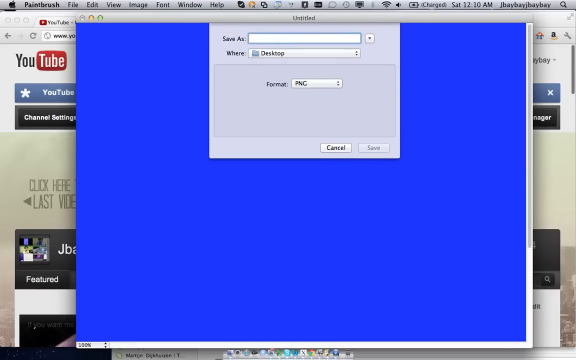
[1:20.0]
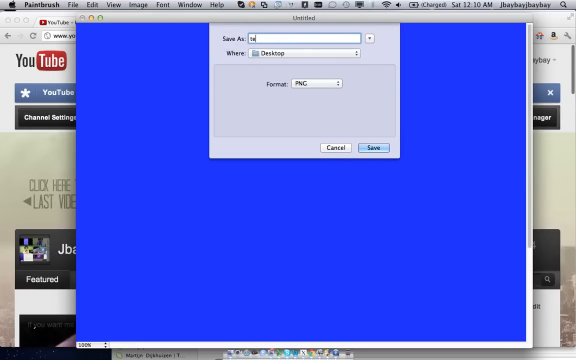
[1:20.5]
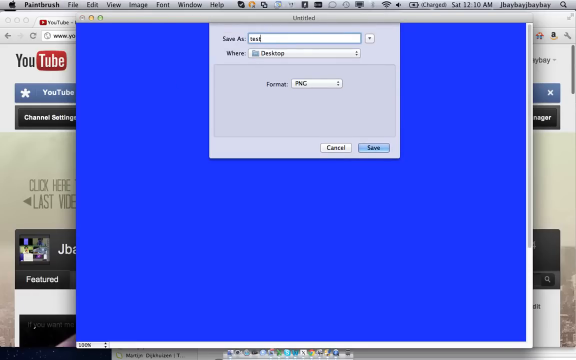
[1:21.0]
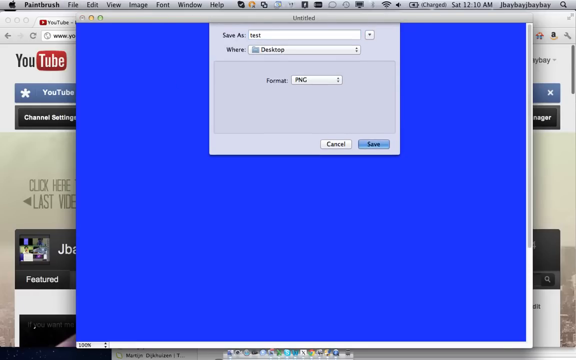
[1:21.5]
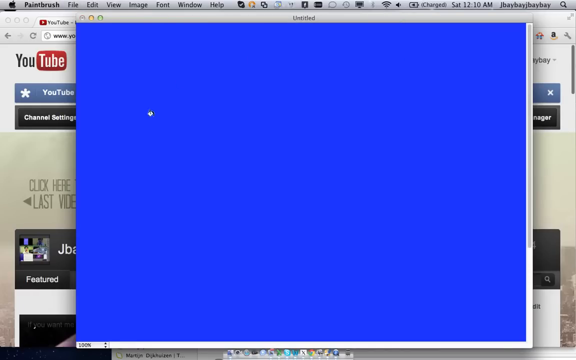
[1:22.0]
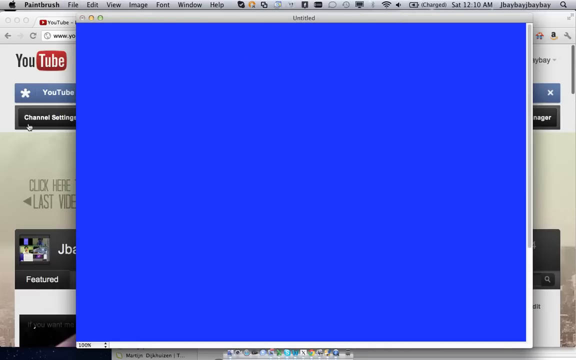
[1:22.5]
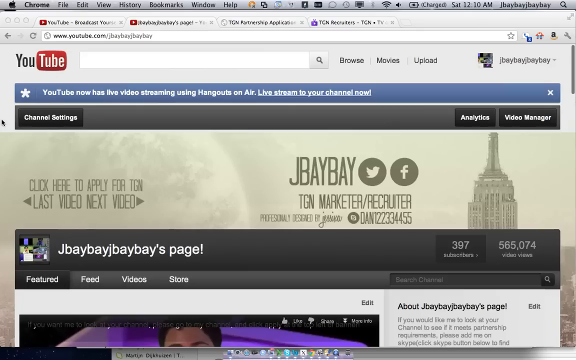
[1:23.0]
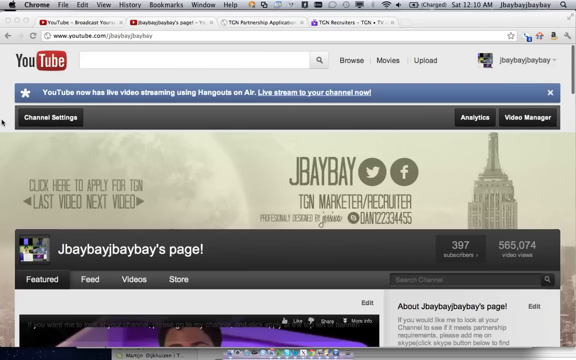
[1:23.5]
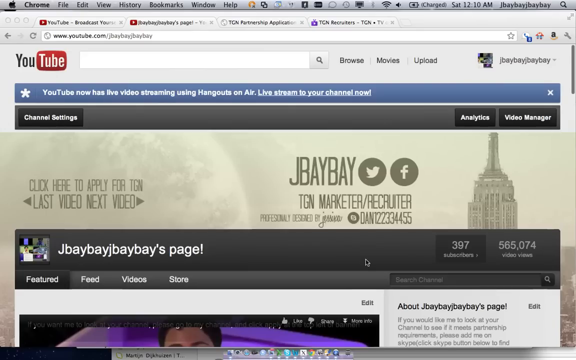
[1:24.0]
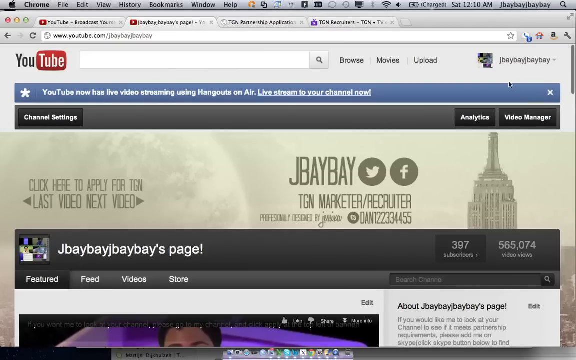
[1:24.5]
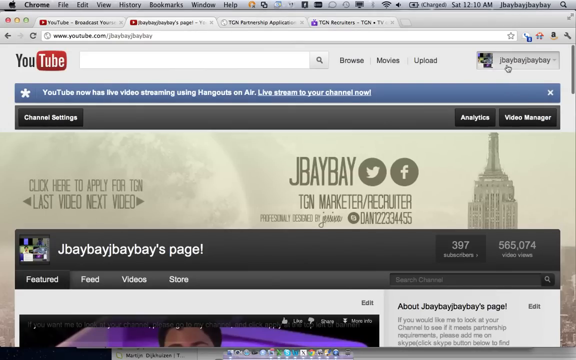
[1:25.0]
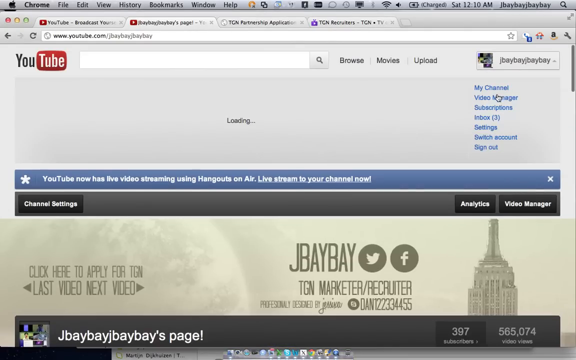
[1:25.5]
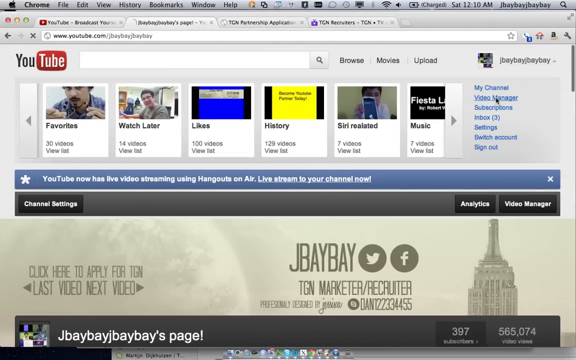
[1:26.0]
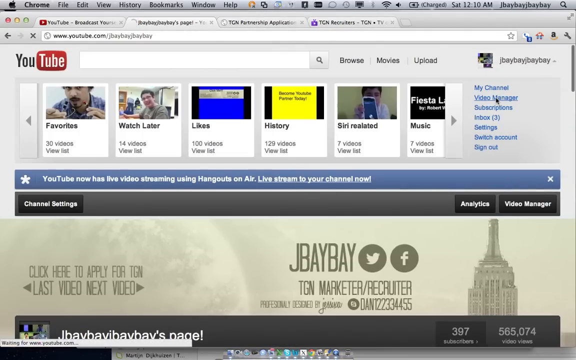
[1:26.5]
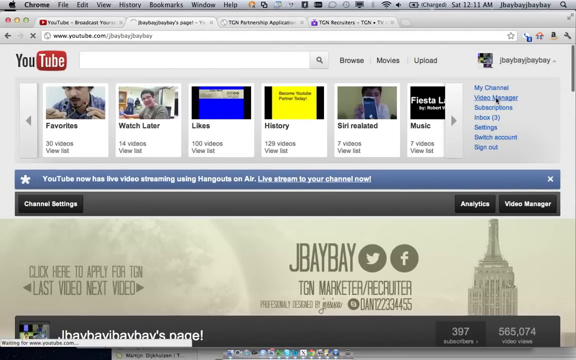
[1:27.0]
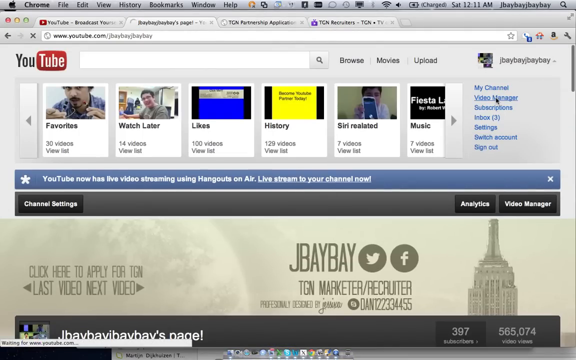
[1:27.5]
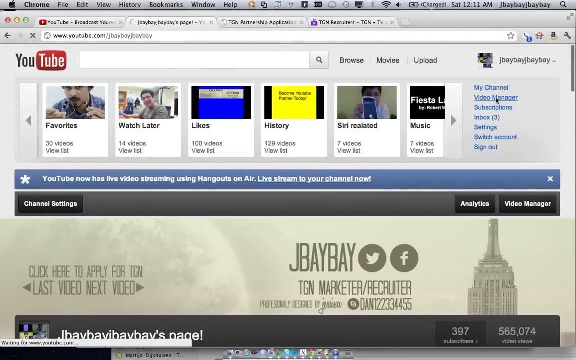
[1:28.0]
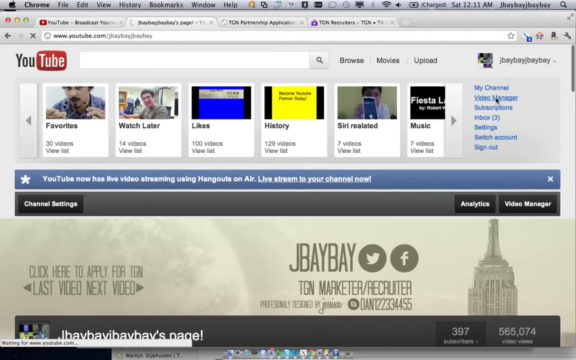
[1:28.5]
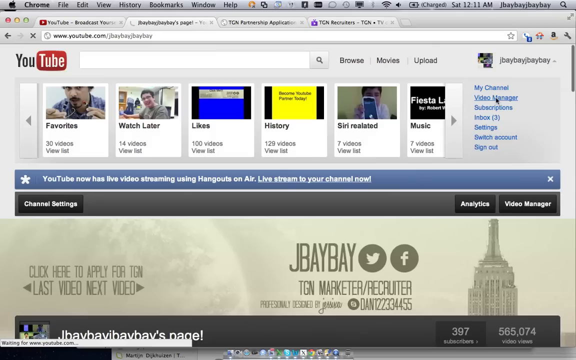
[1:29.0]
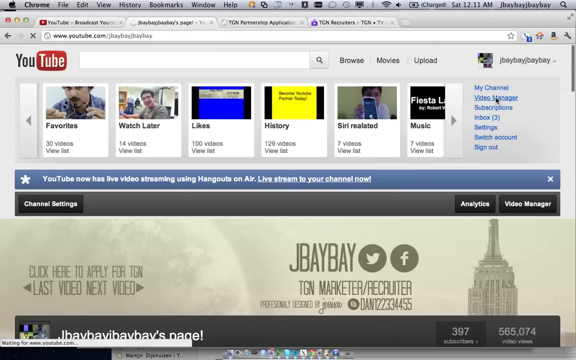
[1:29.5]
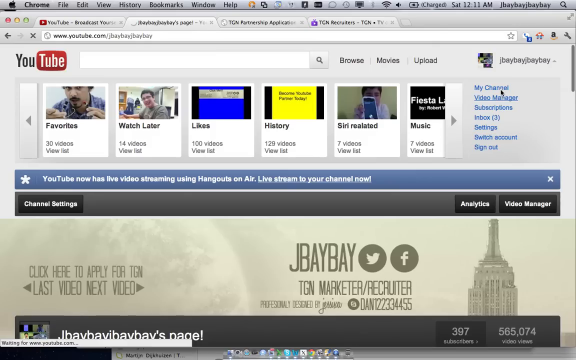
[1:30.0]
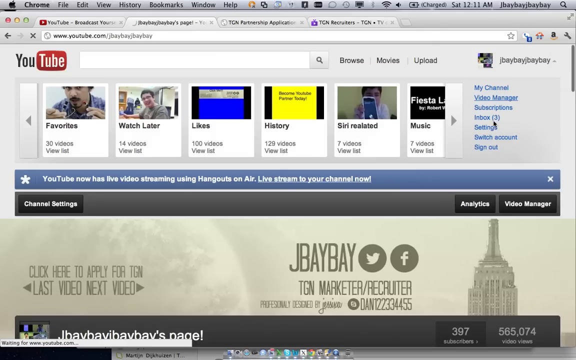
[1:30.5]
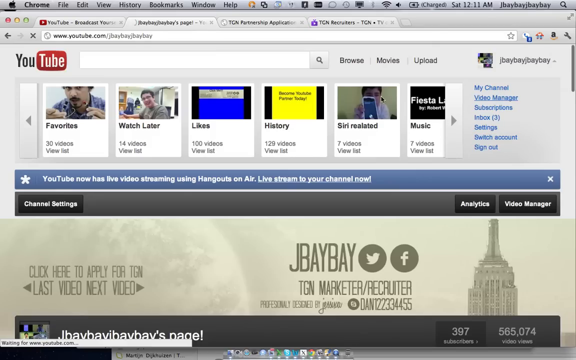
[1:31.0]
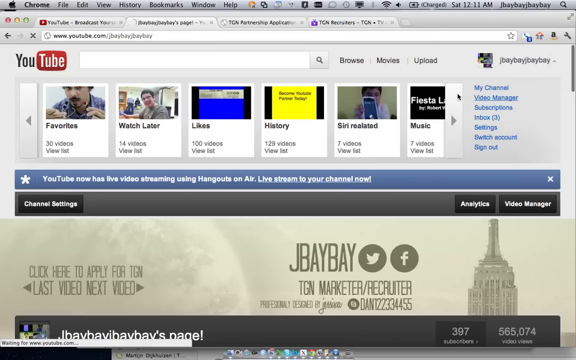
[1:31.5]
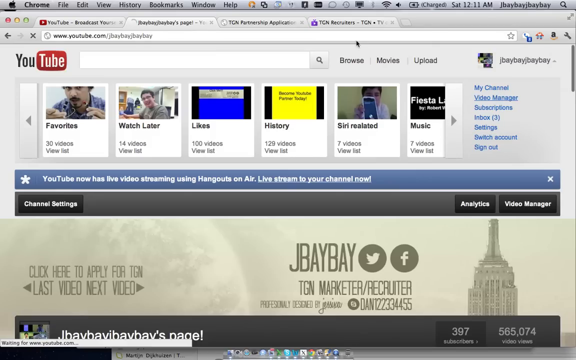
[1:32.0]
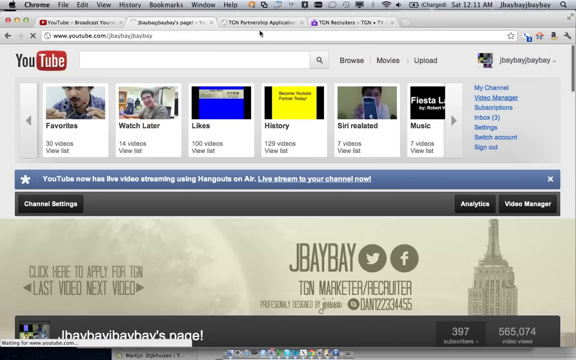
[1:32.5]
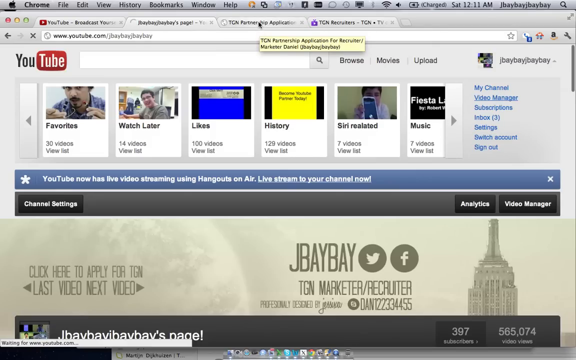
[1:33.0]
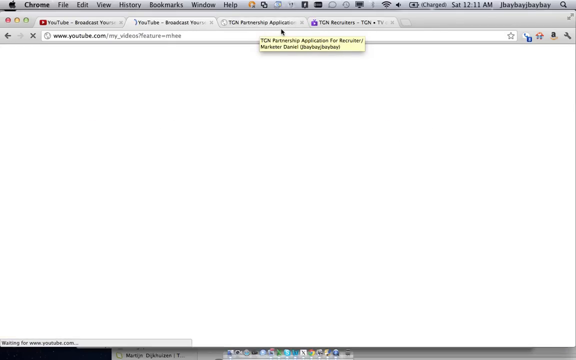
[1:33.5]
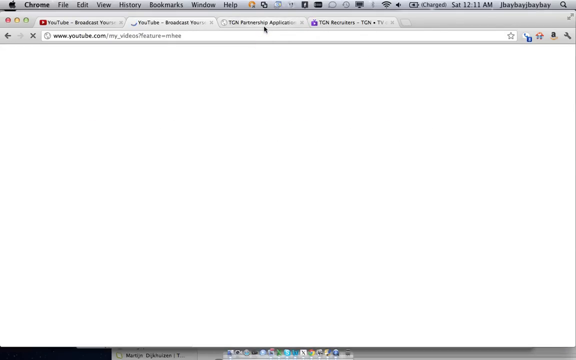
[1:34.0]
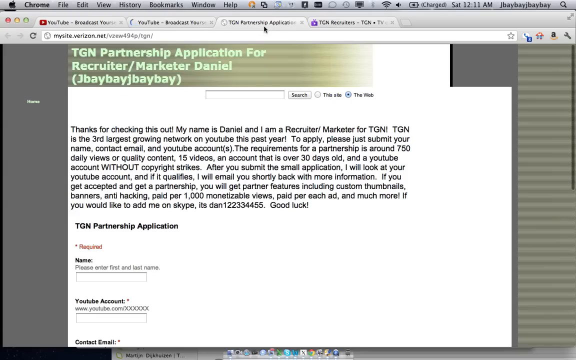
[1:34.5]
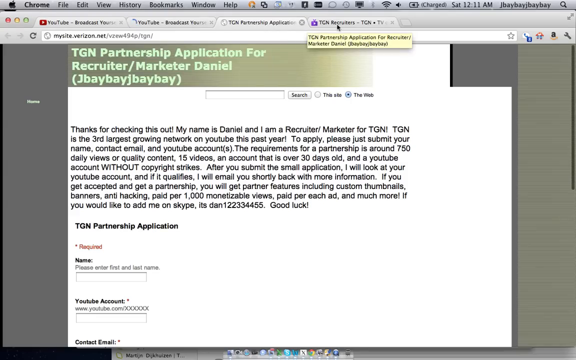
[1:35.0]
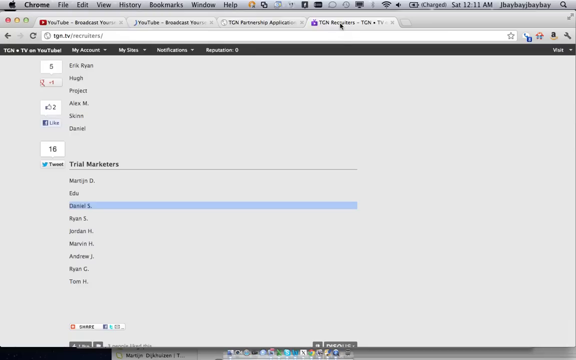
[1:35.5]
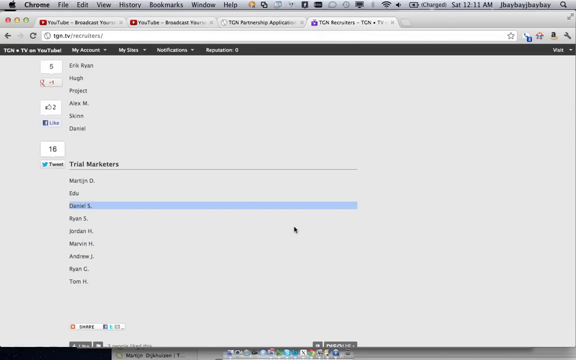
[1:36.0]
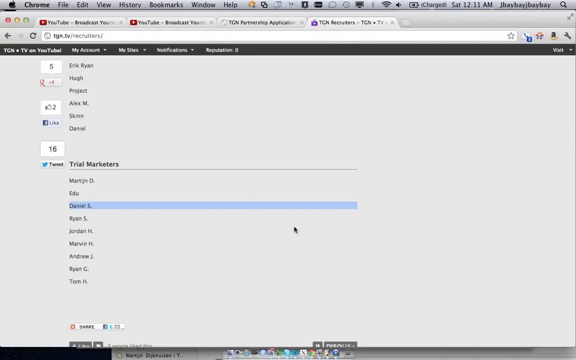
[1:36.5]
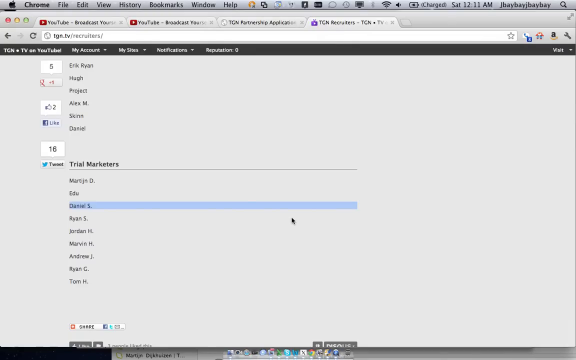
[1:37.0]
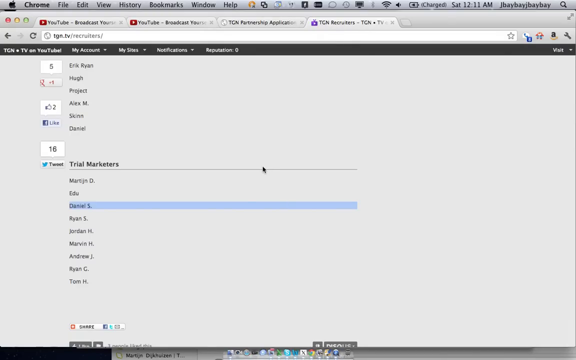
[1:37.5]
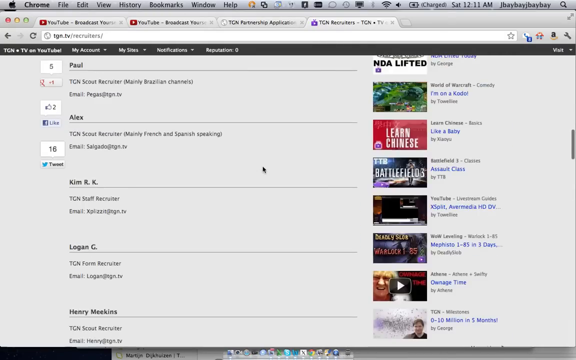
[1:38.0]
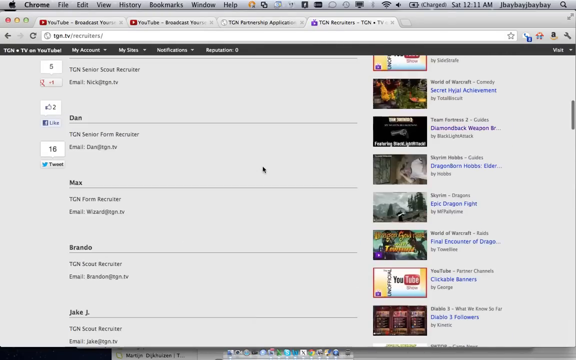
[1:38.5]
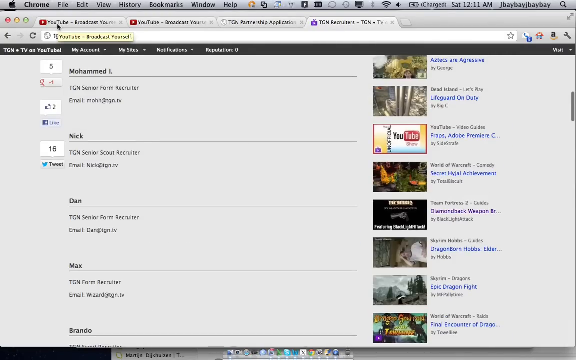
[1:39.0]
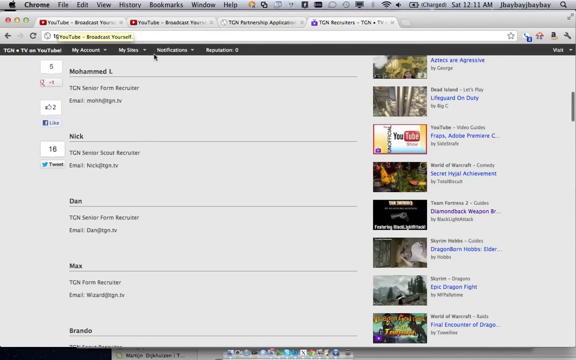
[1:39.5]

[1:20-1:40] On the desktop, a Save As dialog saves the file as "test", a PNG file, to the desktop. The video manager is opened, then the TGN partnership application and the TGN recruiters page are visited, and the view scrolls up as something is selected. On the Jbebe video manager page, a menu drops down with "my channel", "video manager", "subscriptions", "inbox", "settings", "switch account" and "sign out", and a number of videos show up in a carousel format with items such as favorites, watch later, likes, history and music. The partnership application and then the recruiters page are selected. The recruiters page lists trial marketers by name: Marshall, EDW, Daniel S, Ryan S, Jordan H, Marvin H, Andrew J, Ryan G, Tom H, Eric Ryan, Hugh Project and TBL on YouTube. Scrolling up reveals a number of videos and names, for example Dan, a TGN recruiter with an email, and Nick, a TGN senior scout recruiter with an email.